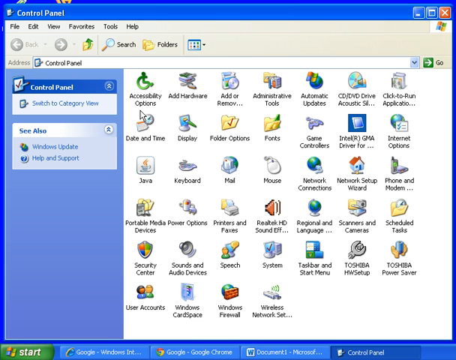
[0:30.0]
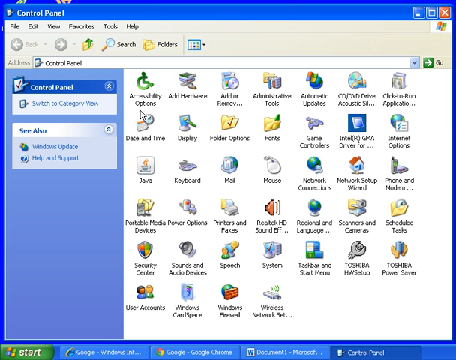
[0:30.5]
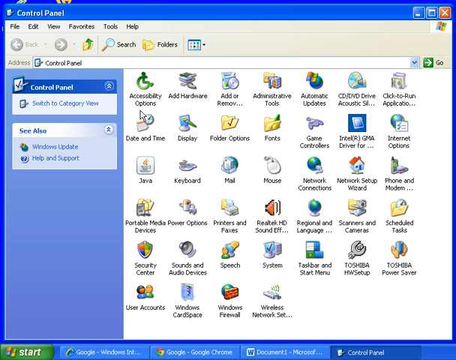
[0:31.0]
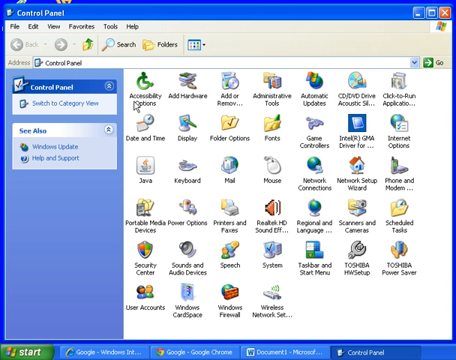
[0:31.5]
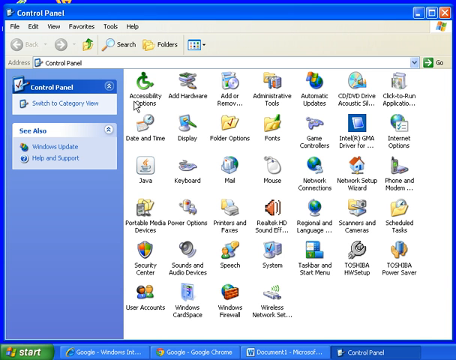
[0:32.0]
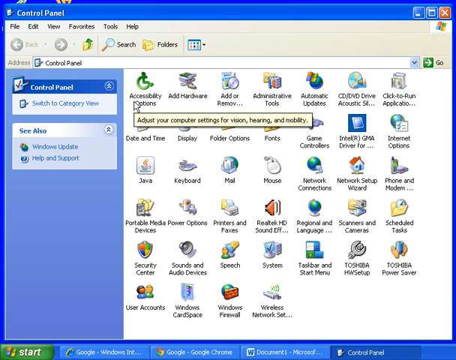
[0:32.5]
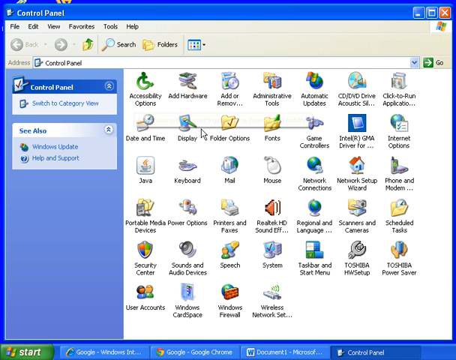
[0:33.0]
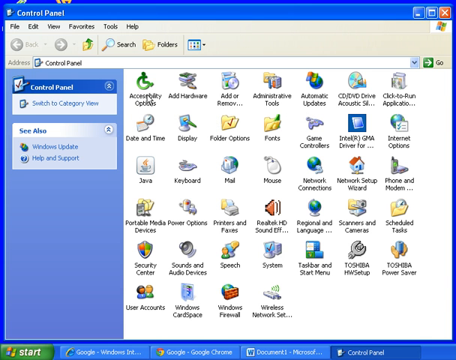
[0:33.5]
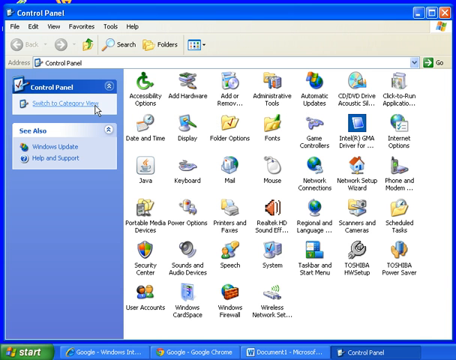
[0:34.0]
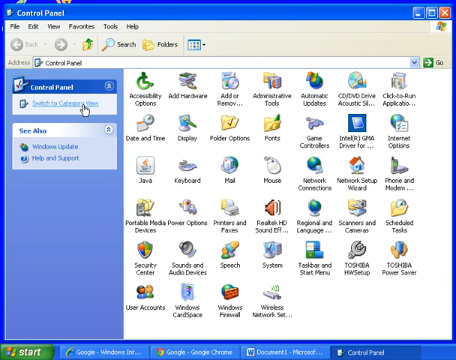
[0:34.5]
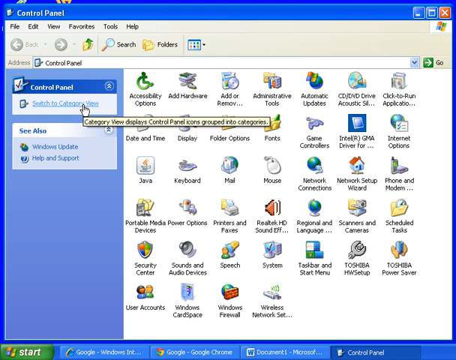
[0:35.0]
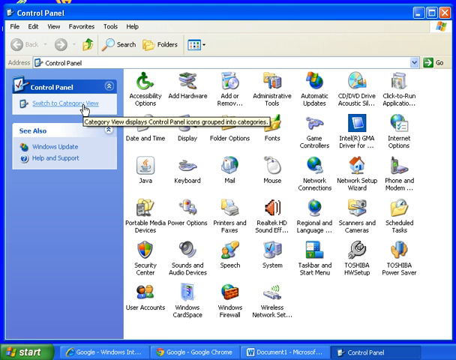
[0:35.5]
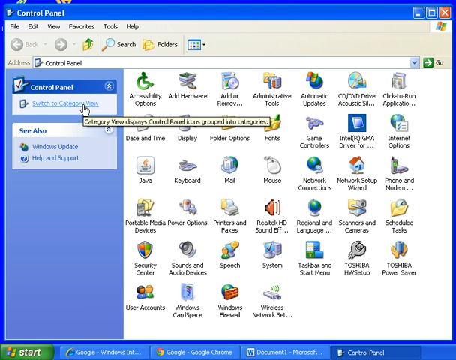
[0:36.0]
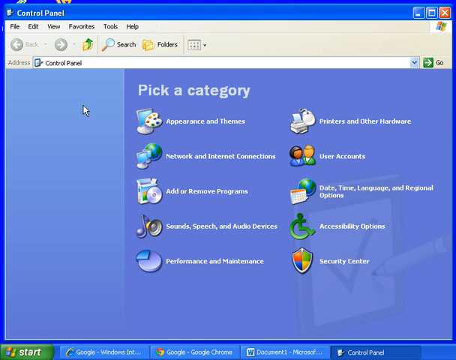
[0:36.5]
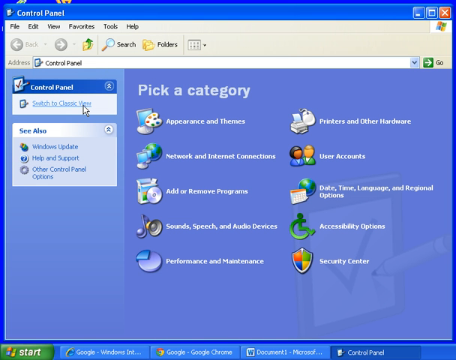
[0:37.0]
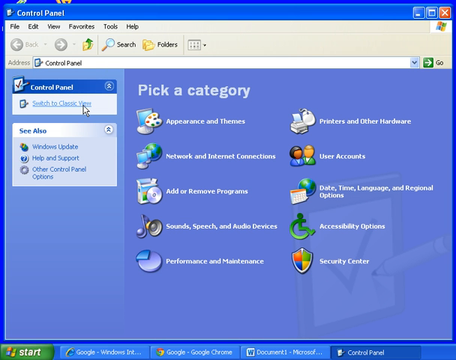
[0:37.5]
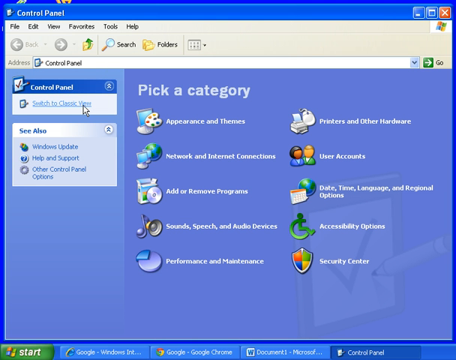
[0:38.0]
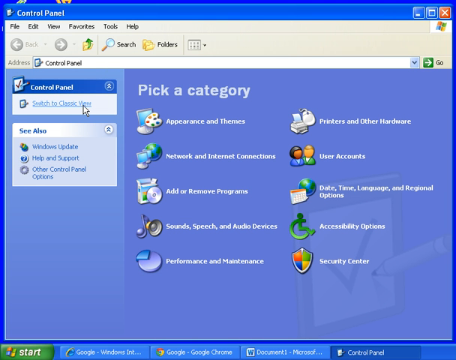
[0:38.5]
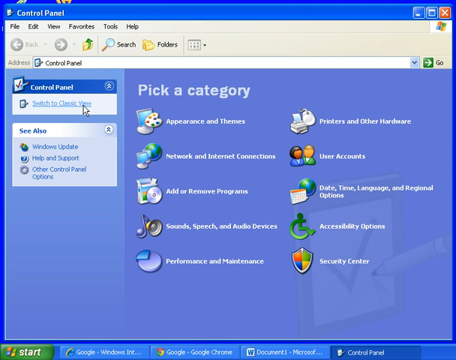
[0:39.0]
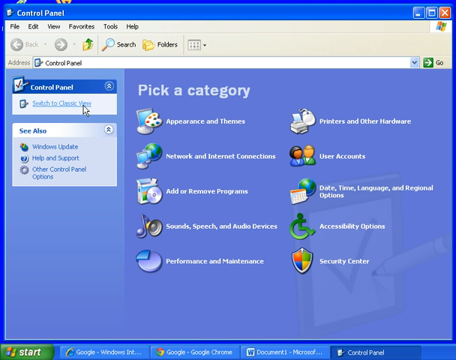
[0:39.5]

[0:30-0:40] The control panel is open on the computer, showing many icons and options, including accessibility options, add hardware, administrative tools, automatic updates, game controllers, Internet options, keyboard, mouse, network connections, power options, printers, speech and system. The user apparently switches to category view, and the screen says "pick a category". The categories listed are appearance and themes, network and internet connections, add or remove programs, sound, speech and audio devices, performance and maintenance, printers and other hardware, user accounts, date, time, language and regional options, accessibility options, and security center.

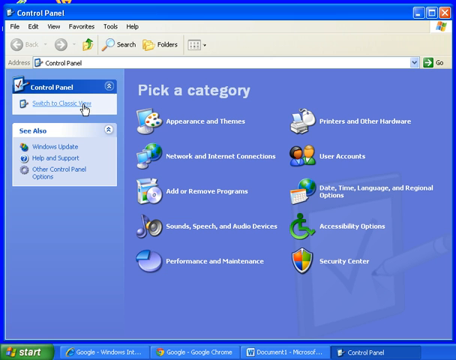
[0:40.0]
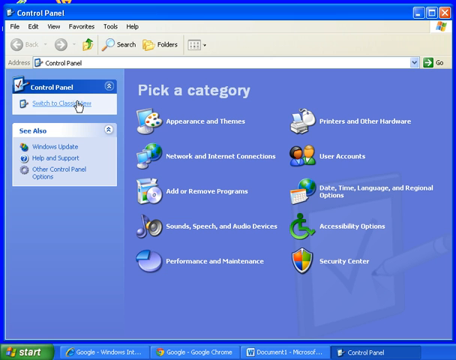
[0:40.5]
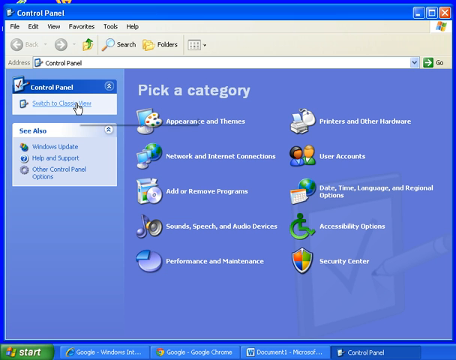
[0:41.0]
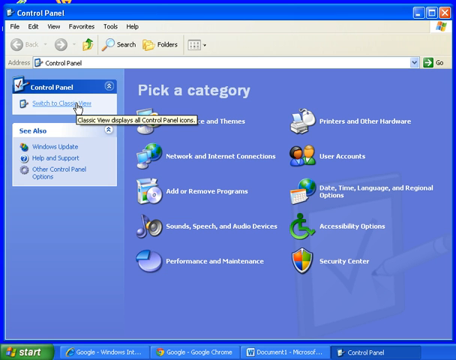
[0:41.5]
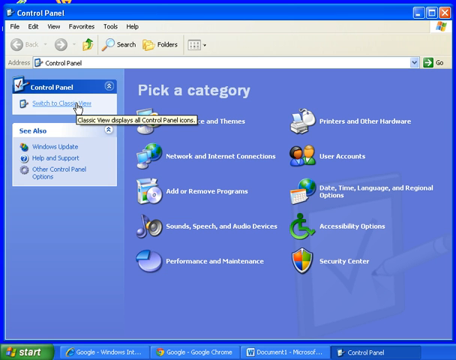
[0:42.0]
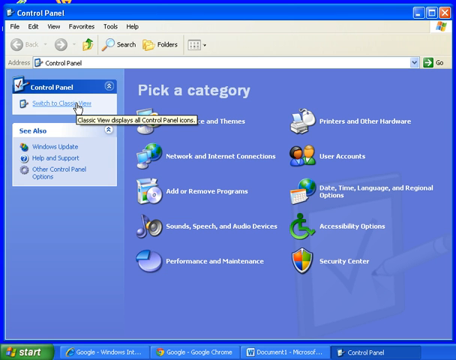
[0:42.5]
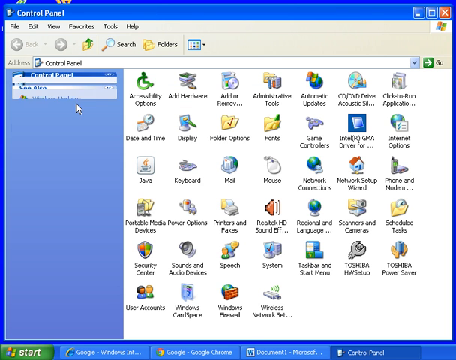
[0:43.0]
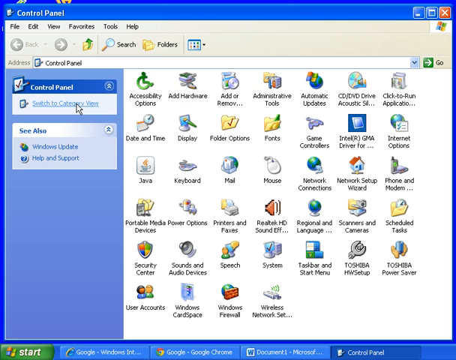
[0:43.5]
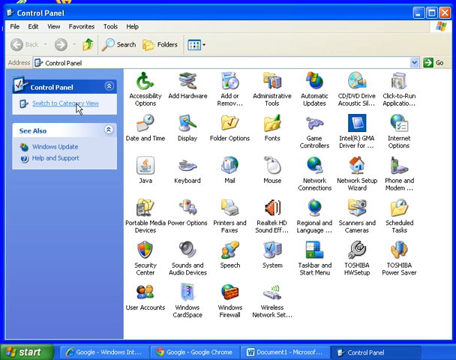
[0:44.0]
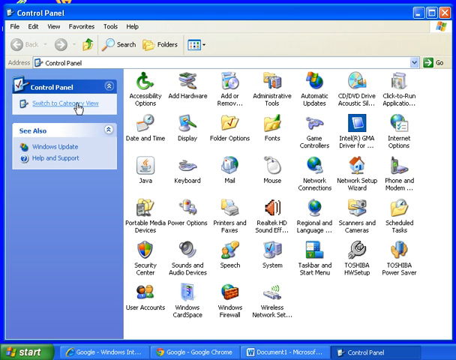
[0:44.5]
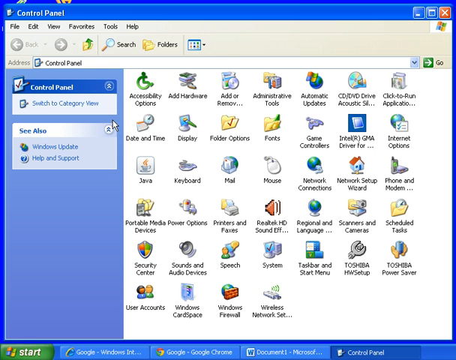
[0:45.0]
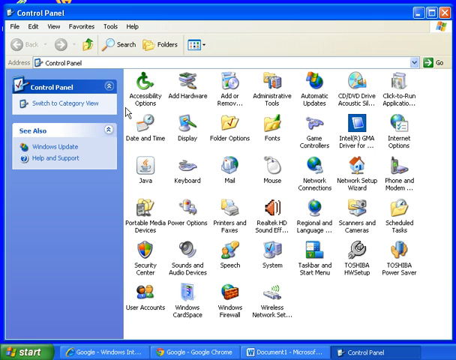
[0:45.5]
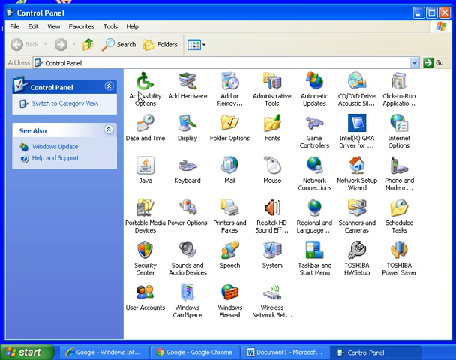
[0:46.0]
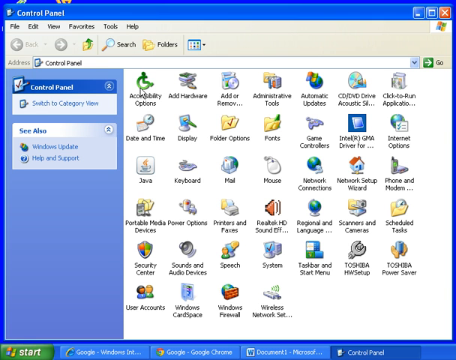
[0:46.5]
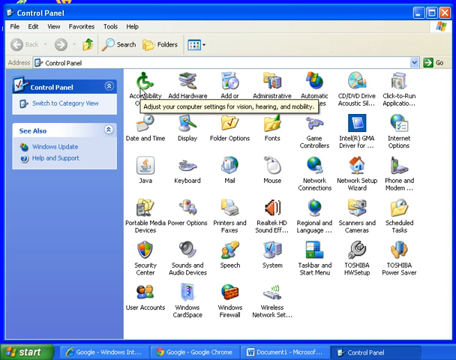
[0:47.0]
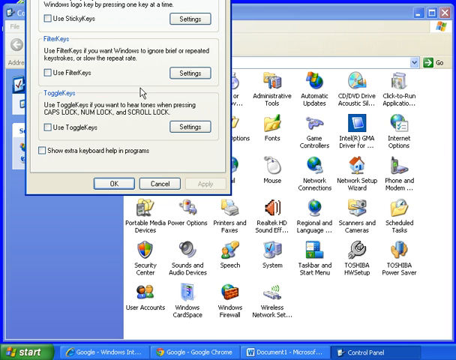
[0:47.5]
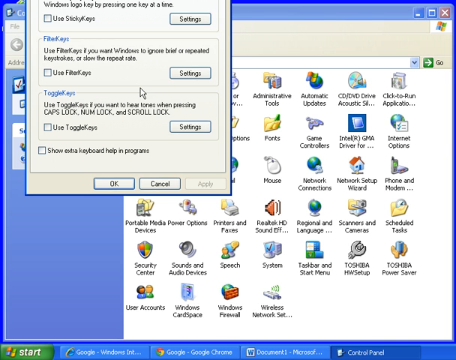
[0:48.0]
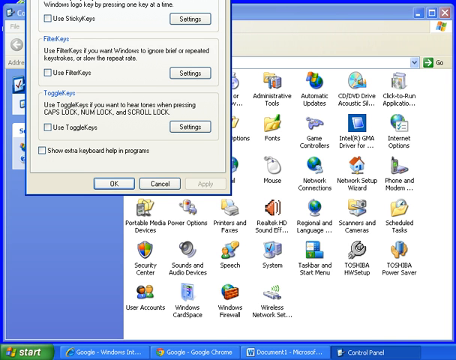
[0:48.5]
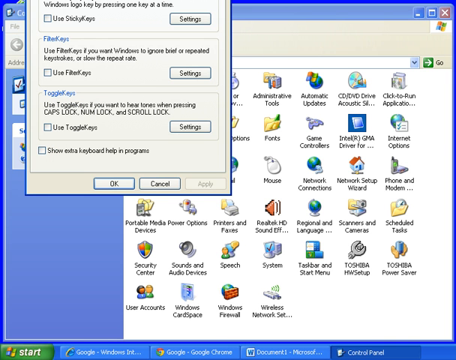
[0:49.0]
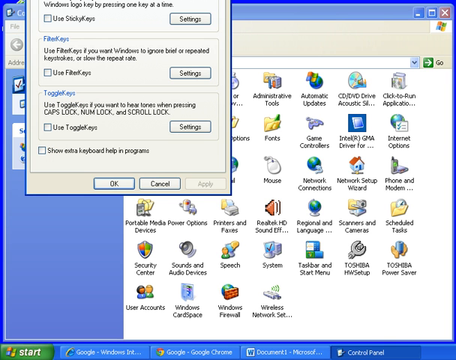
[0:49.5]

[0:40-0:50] The control panel shows "pick a category" with the categories appearance and themes, network and internet connections, add or remove programs, sound, speech and audio devices, performance and maintenance, printers and other hardware, user accounts, date, time, language and regional options, accessibility options, and security center. The user switches to classic view, where many more options are spread out. They click on the accessibility option, which brings up a pop-up, and then the control panel is back in category view.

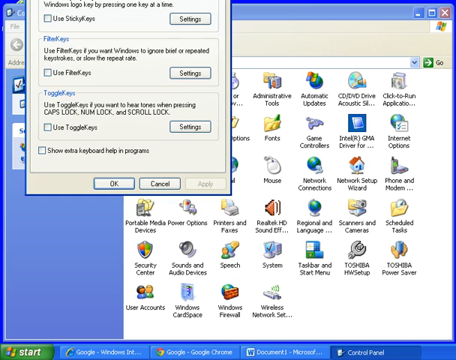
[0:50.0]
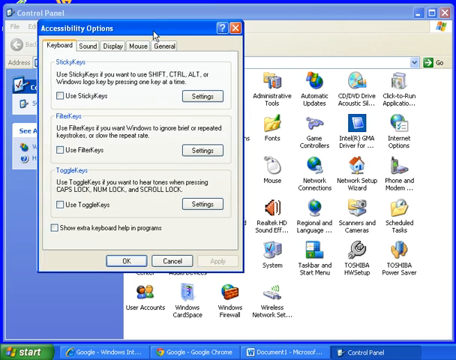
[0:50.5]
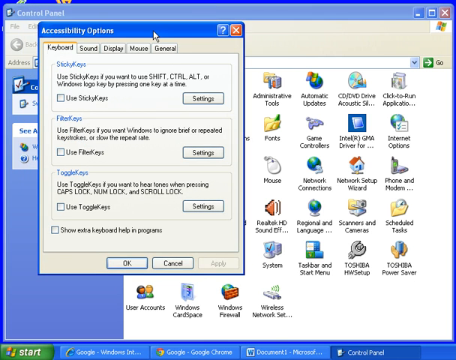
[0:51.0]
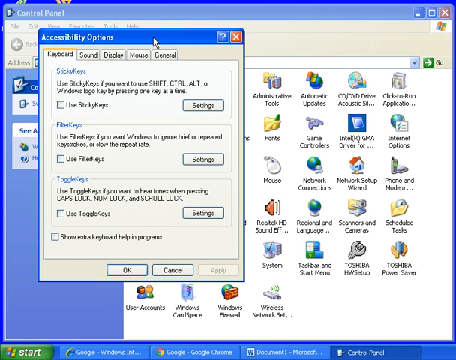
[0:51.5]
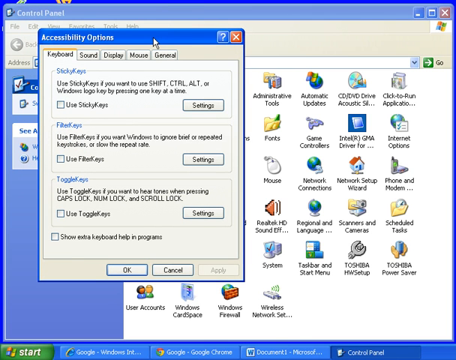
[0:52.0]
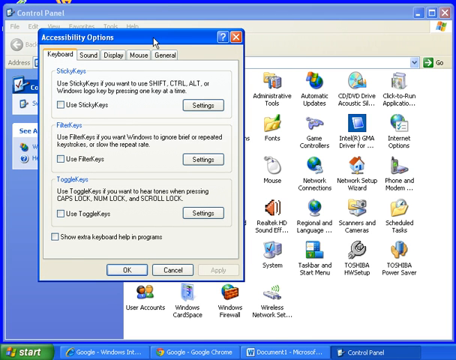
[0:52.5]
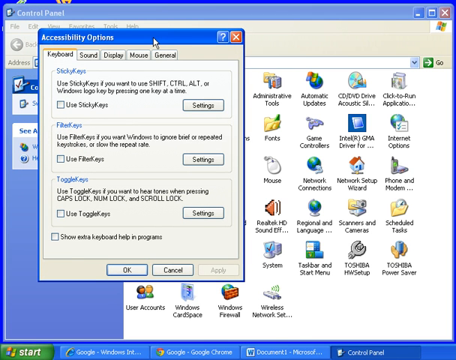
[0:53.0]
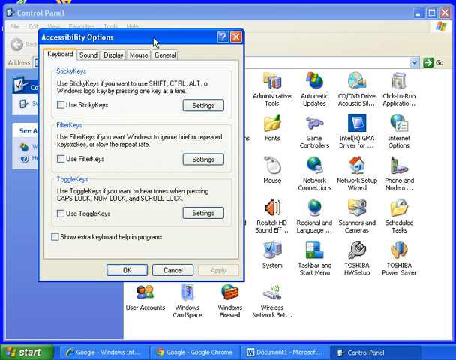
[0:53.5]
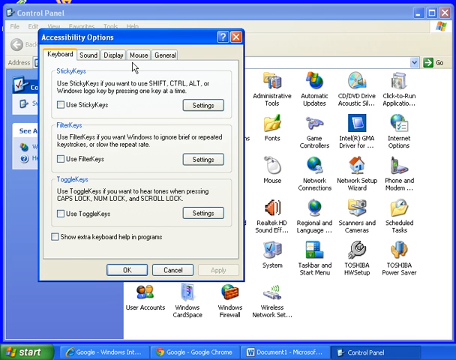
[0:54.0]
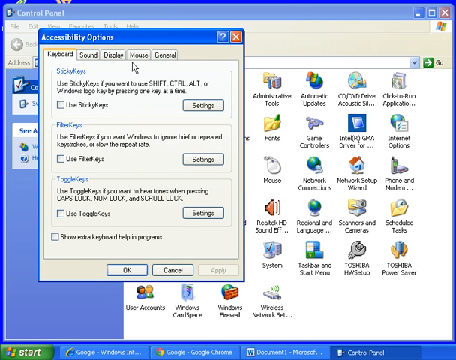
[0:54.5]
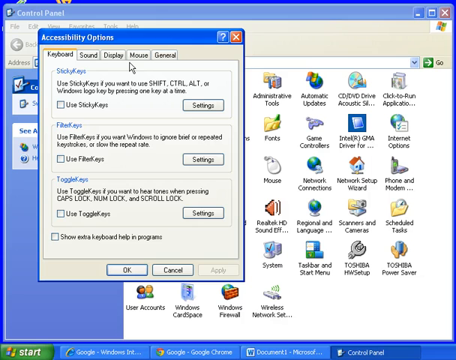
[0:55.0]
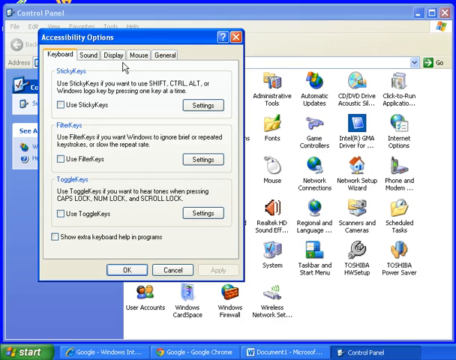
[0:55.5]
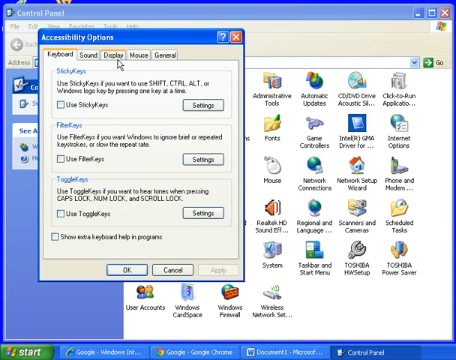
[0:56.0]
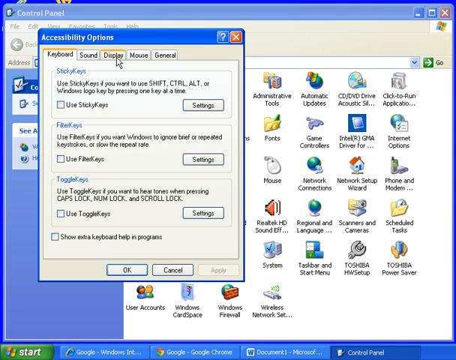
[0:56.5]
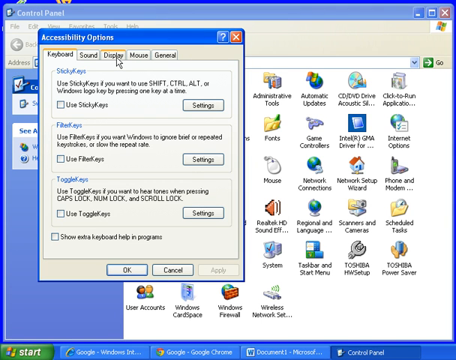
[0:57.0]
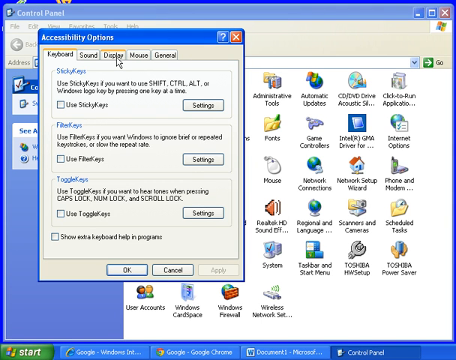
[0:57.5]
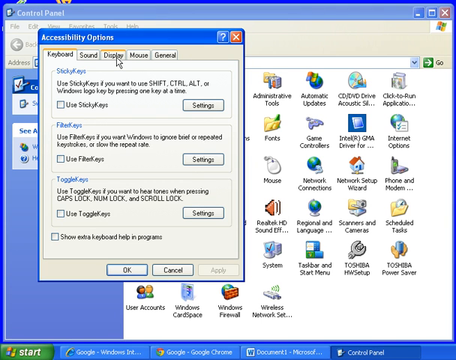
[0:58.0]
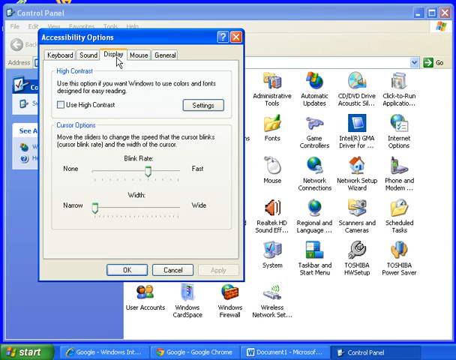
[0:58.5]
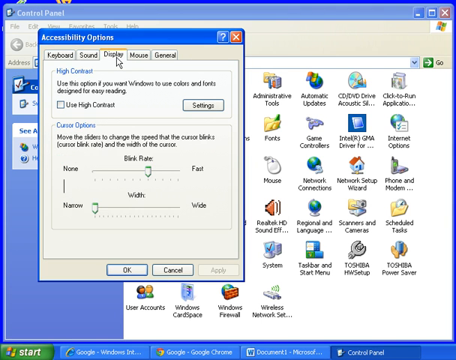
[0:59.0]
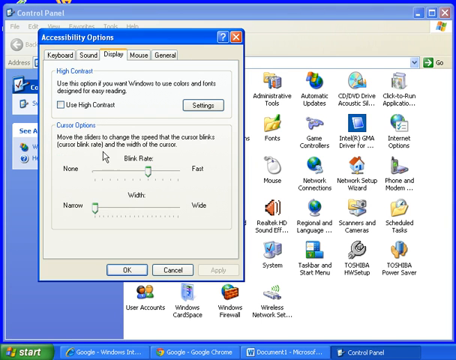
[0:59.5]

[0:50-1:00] The control panel is open, with a settings window for an icon the user just clicked, apparently accessibility options, with tabs that look like keyboard, sound, display, mouse and general. The user clicks the display tab, which shows "high contrast" with the text "use this option if you want Windows to use colors and fonts designed for easy reading", followed by cursor options for blink rate and width.